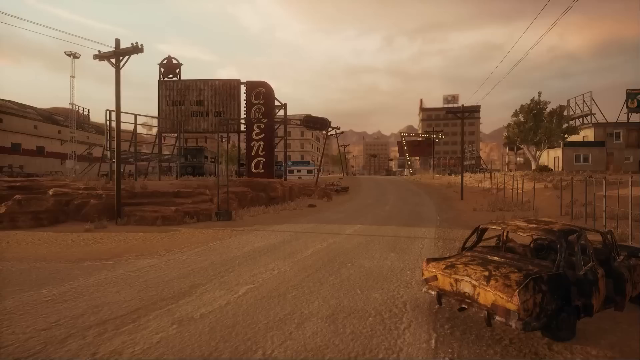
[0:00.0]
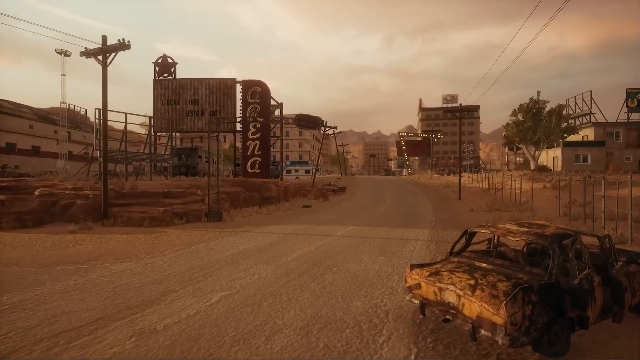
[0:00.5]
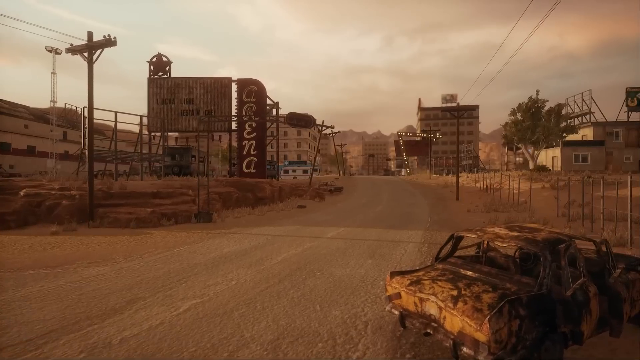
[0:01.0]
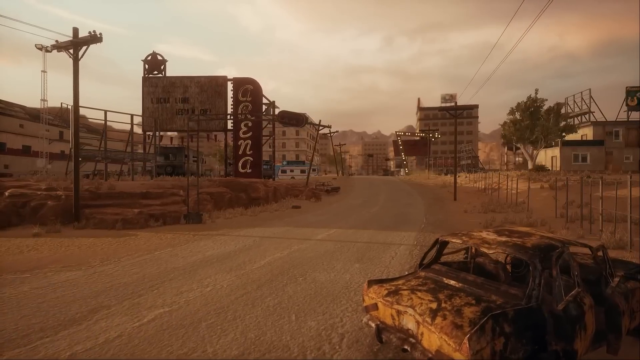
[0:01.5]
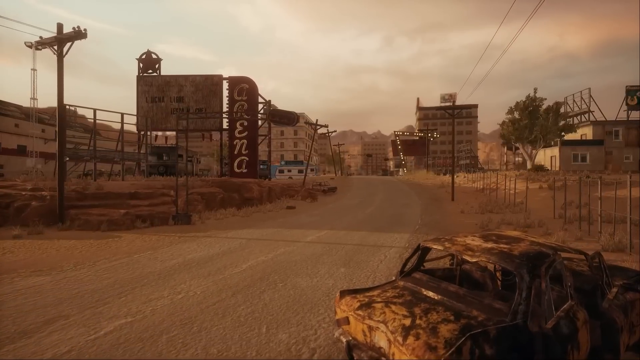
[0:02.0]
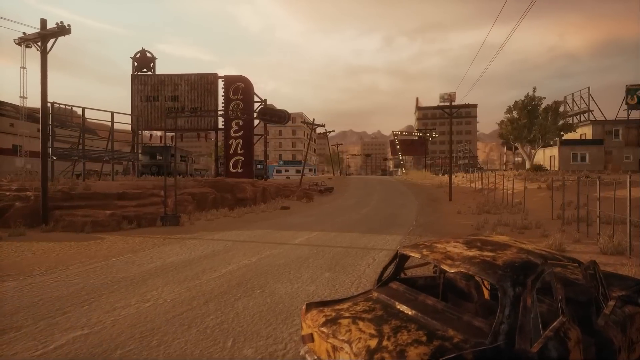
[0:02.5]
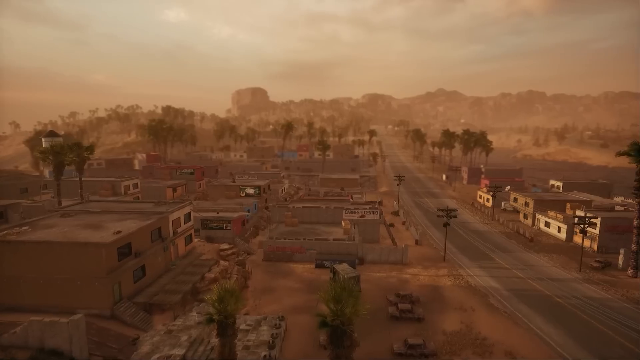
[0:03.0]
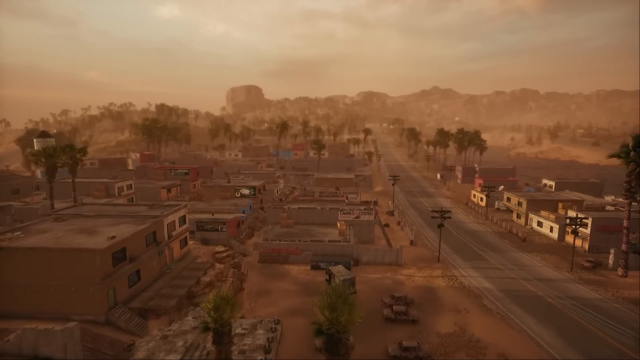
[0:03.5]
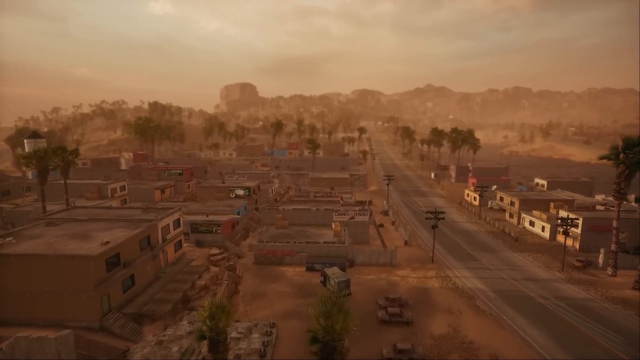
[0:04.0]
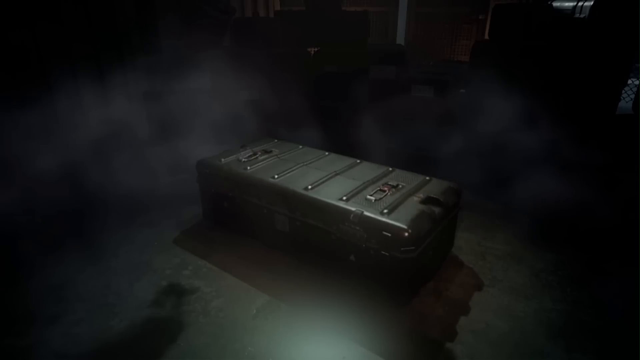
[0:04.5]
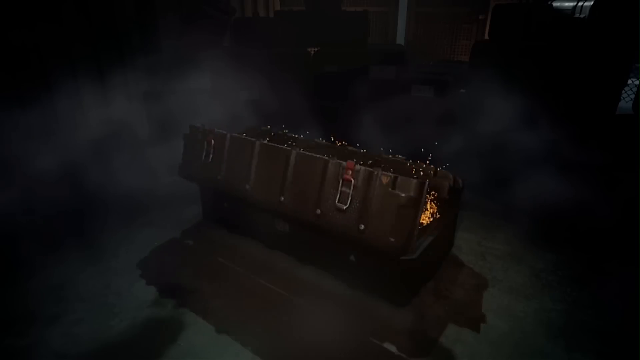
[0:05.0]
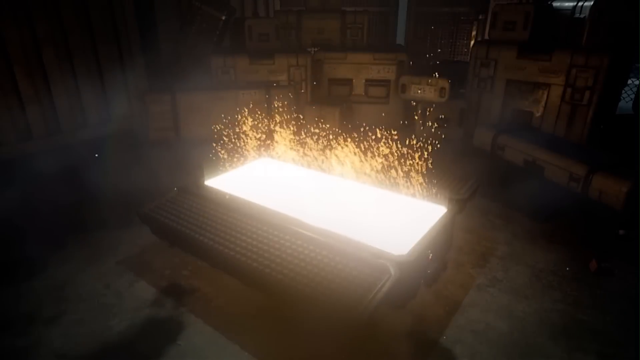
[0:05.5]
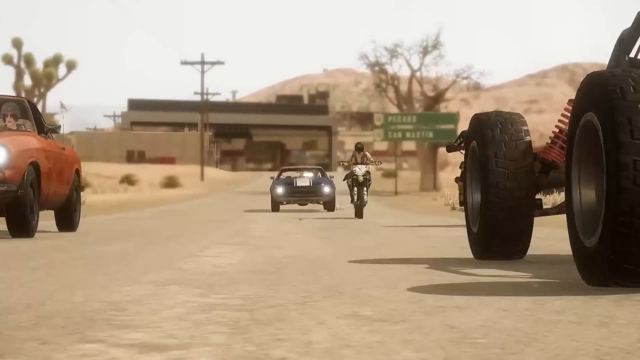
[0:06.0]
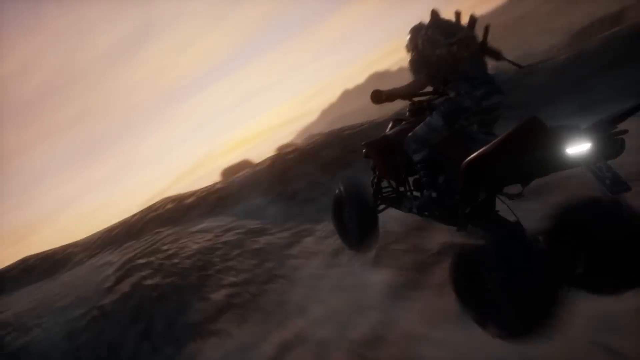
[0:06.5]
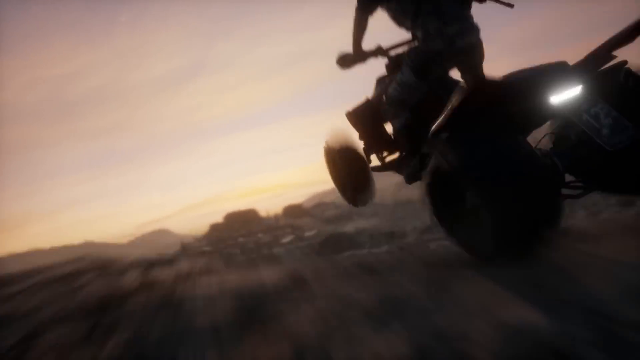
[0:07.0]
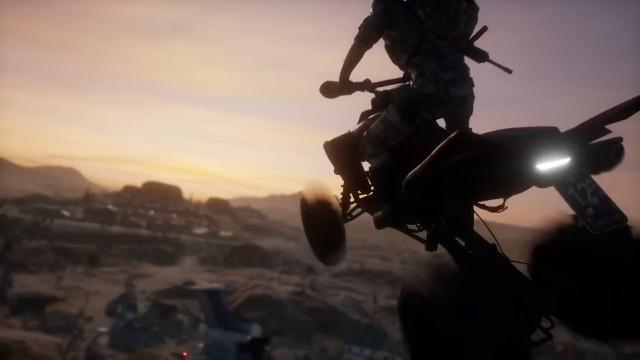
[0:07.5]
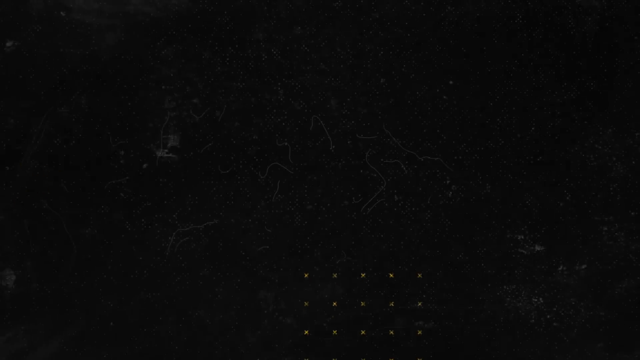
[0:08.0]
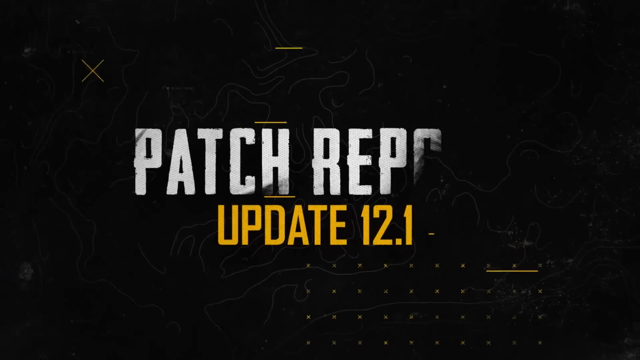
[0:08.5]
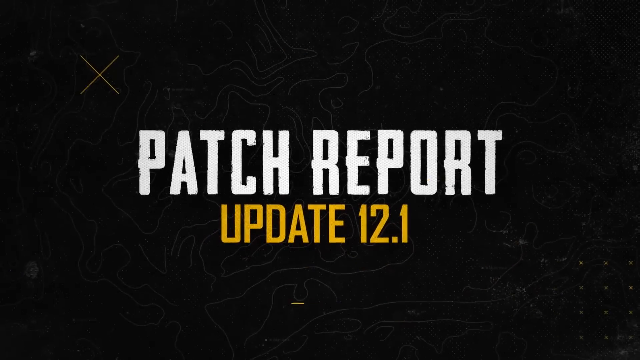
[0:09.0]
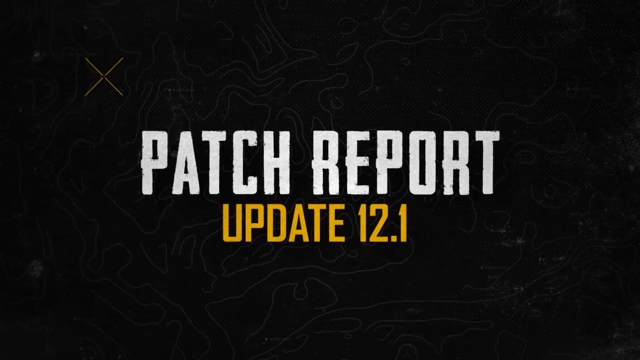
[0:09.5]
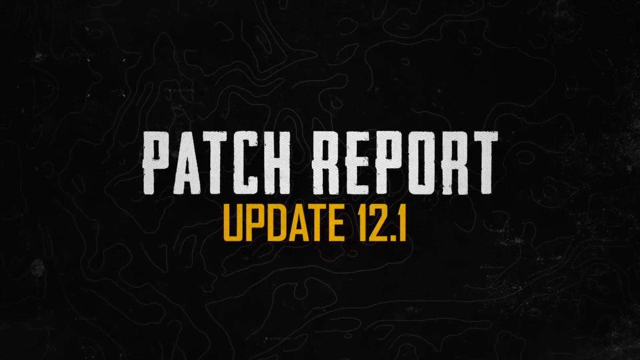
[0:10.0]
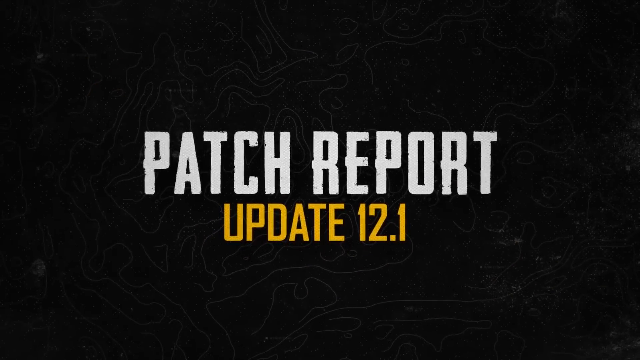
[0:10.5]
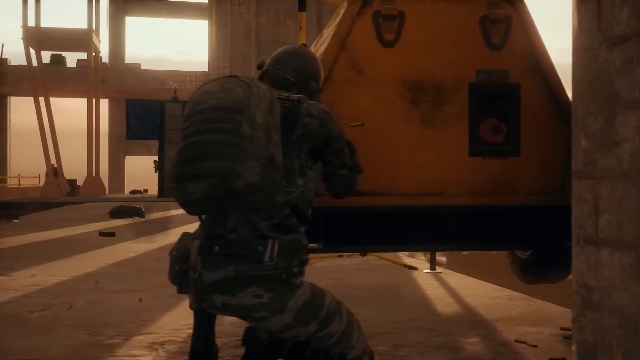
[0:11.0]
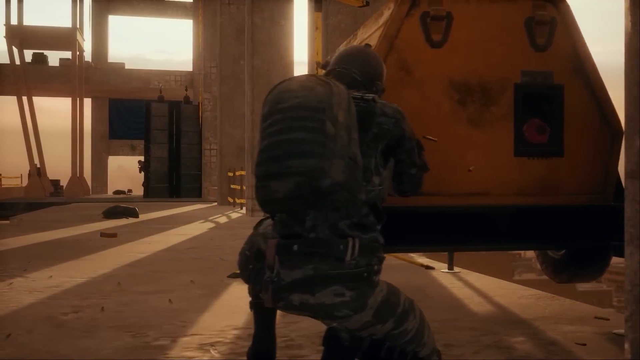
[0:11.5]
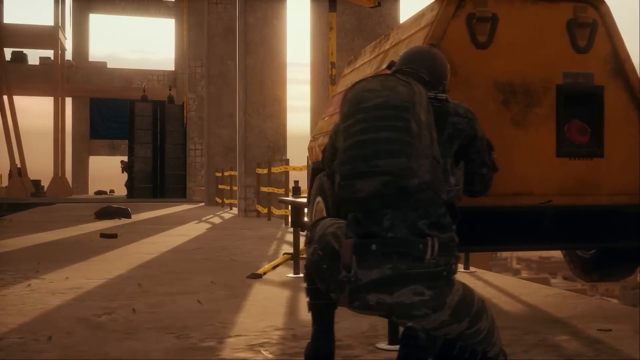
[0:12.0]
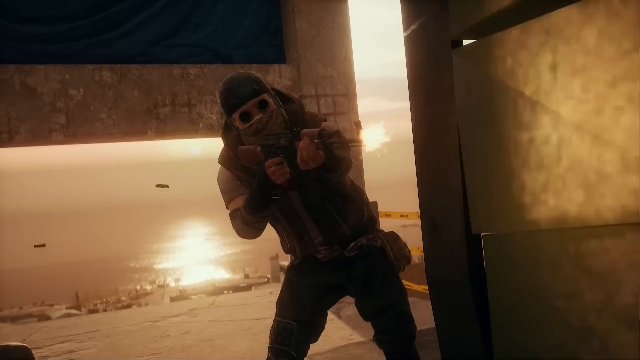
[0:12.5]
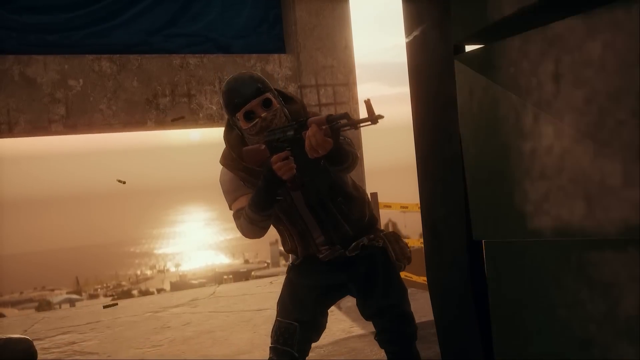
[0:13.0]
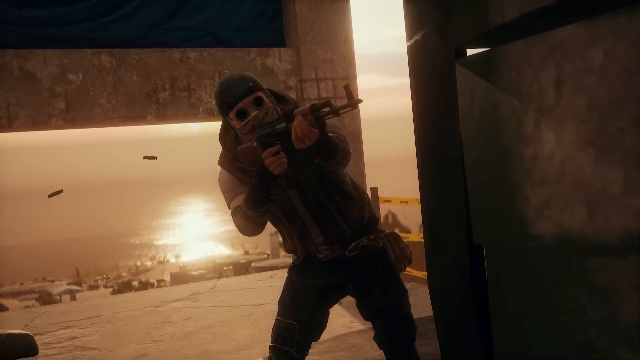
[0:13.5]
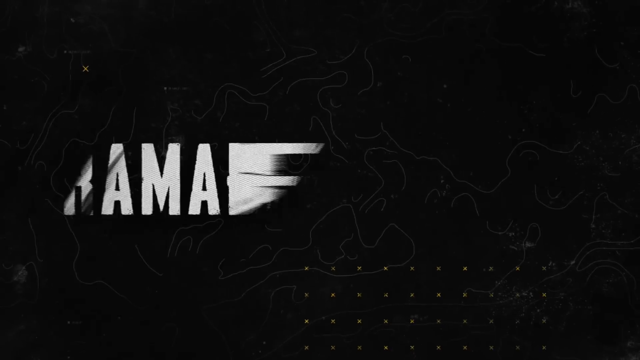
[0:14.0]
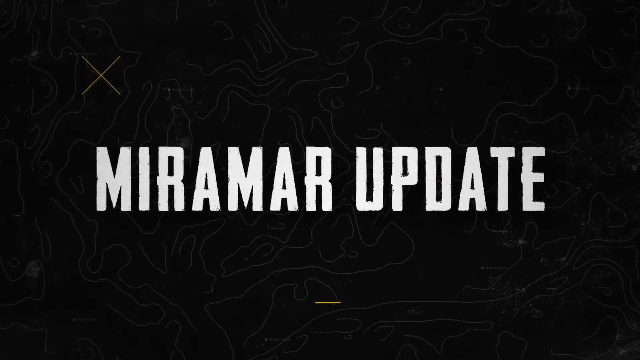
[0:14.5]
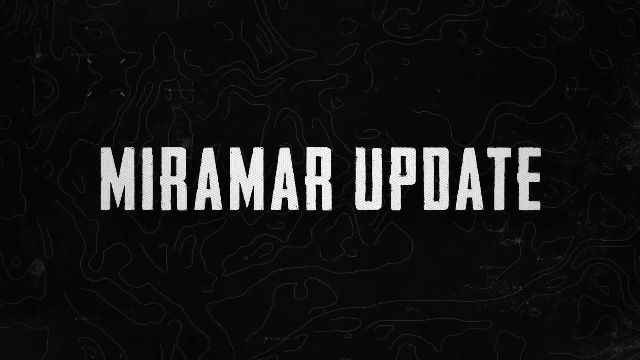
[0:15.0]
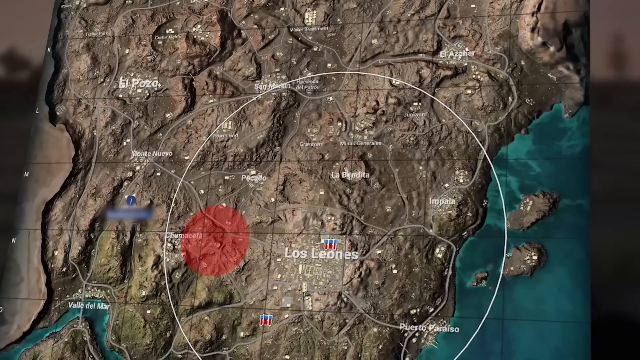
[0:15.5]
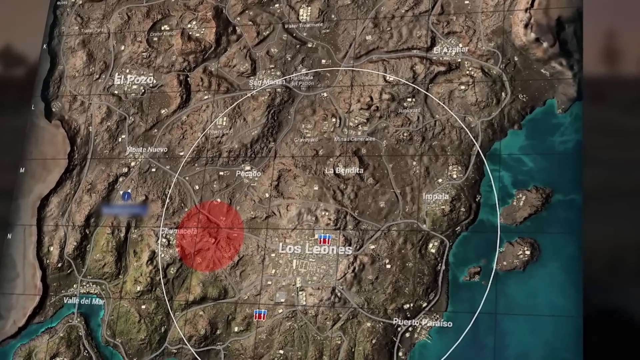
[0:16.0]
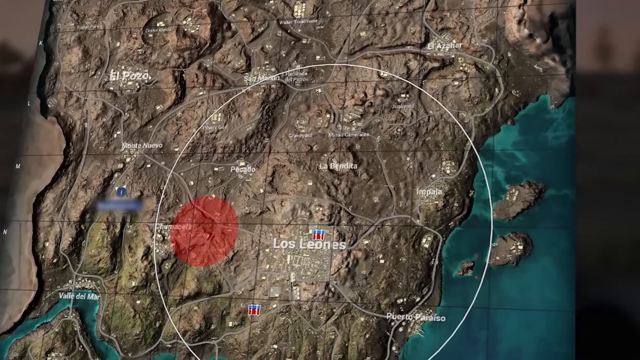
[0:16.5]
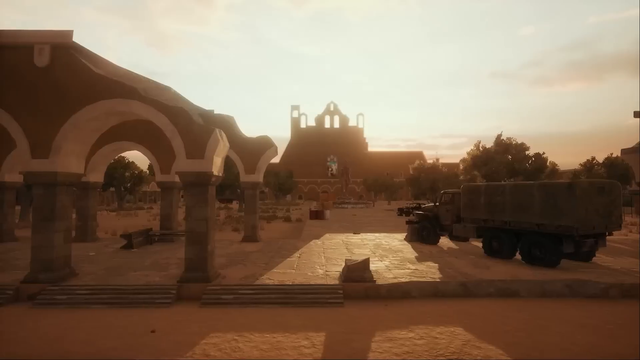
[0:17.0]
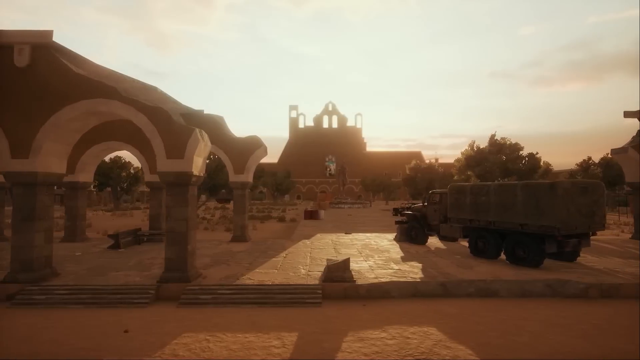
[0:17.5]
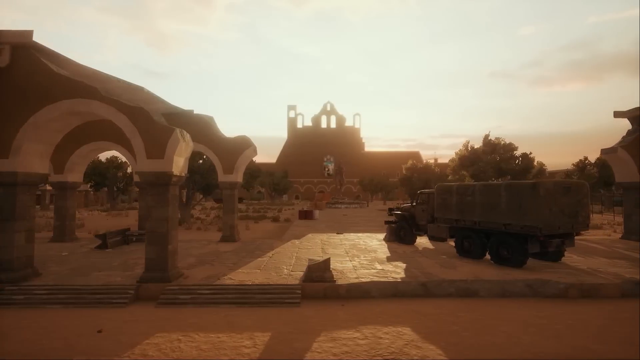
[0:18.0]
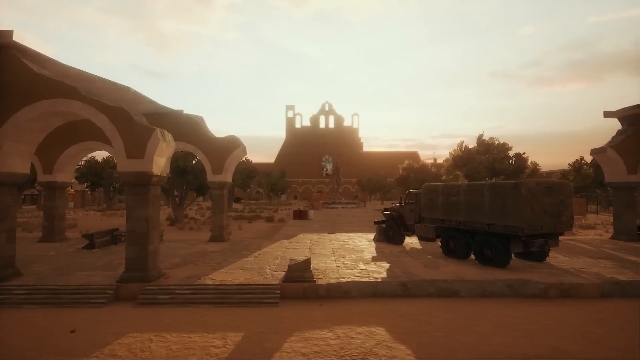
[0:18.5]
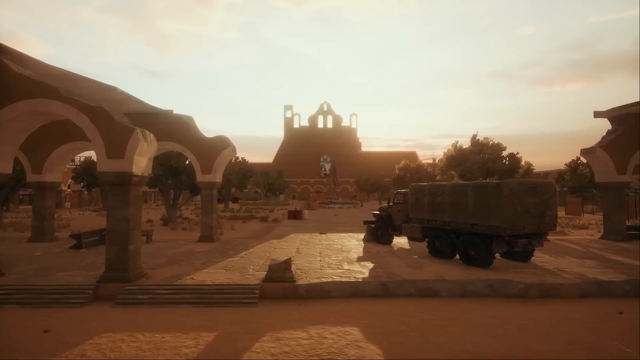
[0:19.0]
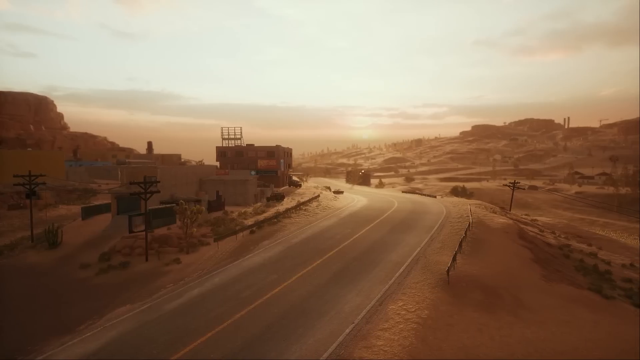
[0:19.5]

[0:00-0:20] The camera zooms into an area that looks like a sort of outback place, very yellow and sandy looking. The weather is quite overcast and cloudy. There are buildings, but they look quite run down, and the metal on the cars looks rusted. The camera then moves to a view looking down on the area, which is quite flat, although there are some hills and some trees in the background, and the camera slowly pans. Suddenly the video switches to a black chest-like box opening, with a really bright white light inside and golden sparks coming off it into the air. Very quickly it changes to people in different vehicles: some in cars, some on bikes and some on quad bikes. A black screen appears with "patch report" in big white letters and, underneath it in yellow writing, "update 12.1". A man crouches down behind a tank of some kind, shooting at someone in the distance. The camera zooms in on that distant person, who appears around the edge of a hiding place and returns fire. Another black screen appears, reading "Miramar update" in big white letters. These slides go by very fast, staying on screen for a second or less. Next comes an overview of a map, with a big white circle around the area of Los Leones and, inside it, a smaller red circle covering an area. Another overview of the map that the people are playing in follows.